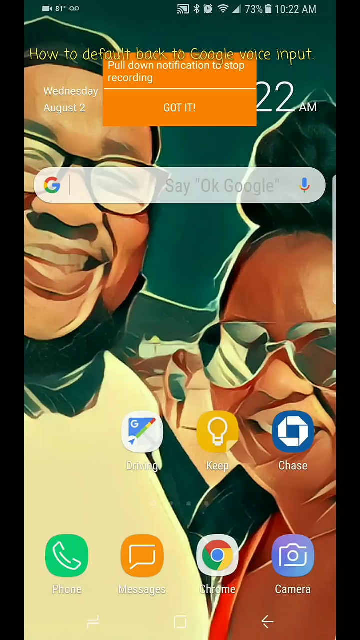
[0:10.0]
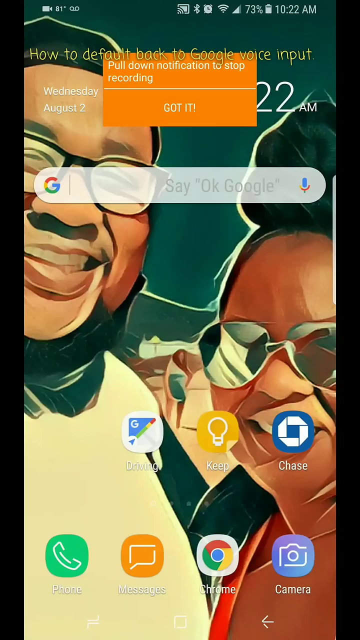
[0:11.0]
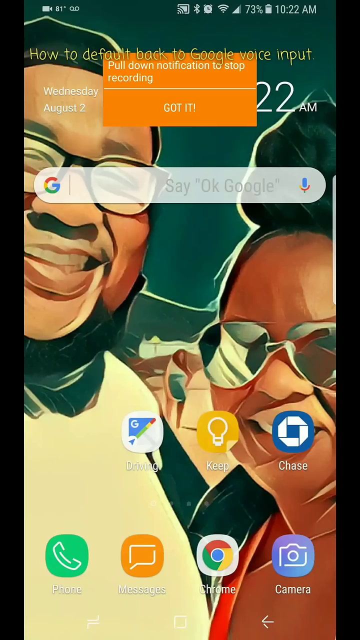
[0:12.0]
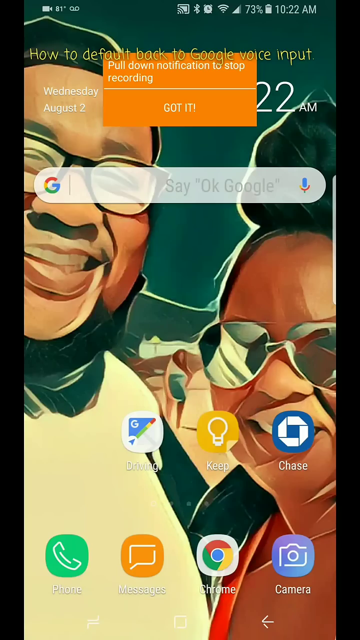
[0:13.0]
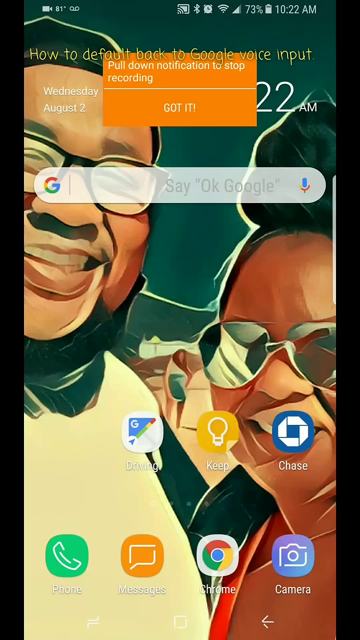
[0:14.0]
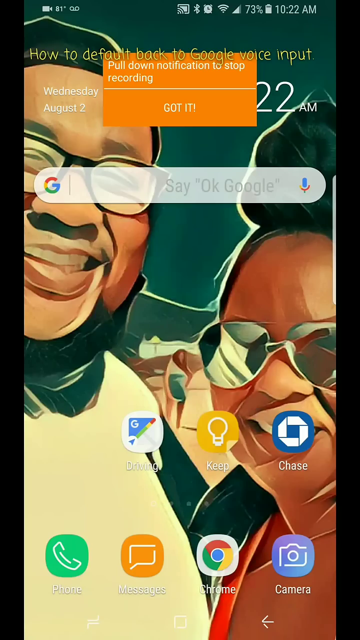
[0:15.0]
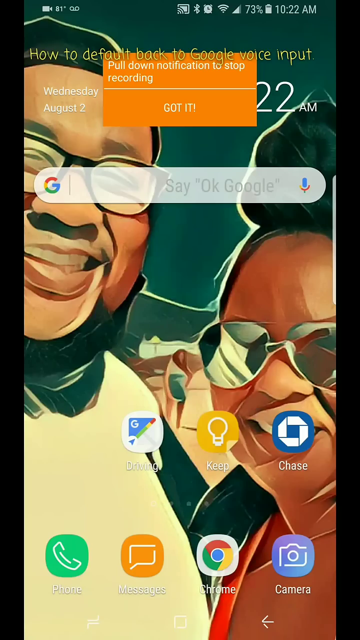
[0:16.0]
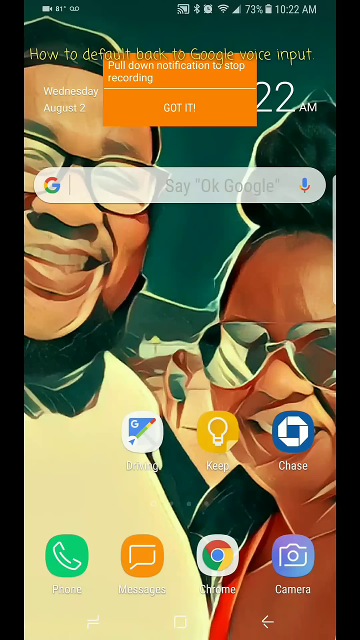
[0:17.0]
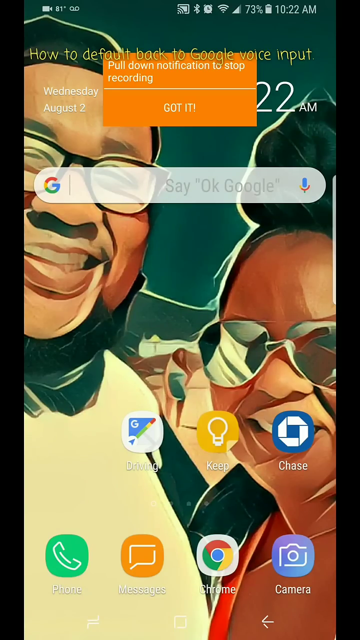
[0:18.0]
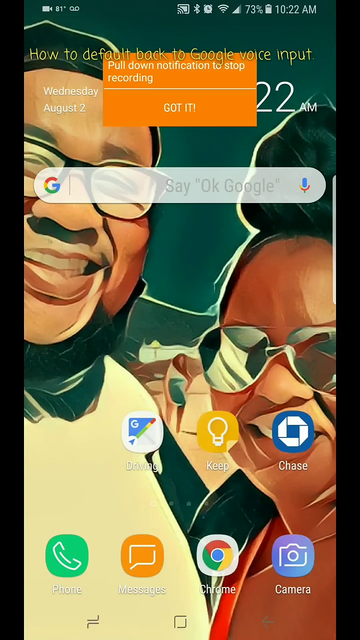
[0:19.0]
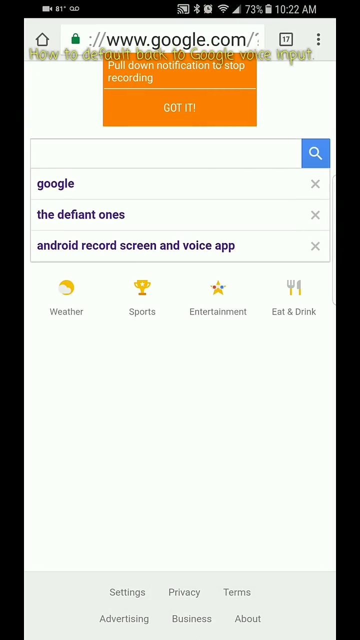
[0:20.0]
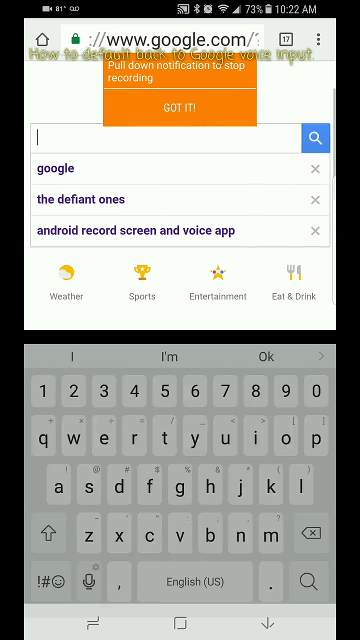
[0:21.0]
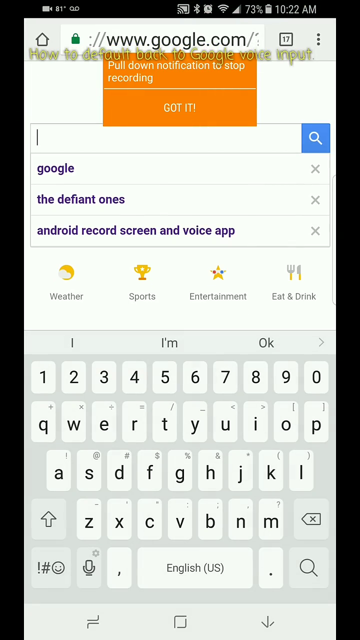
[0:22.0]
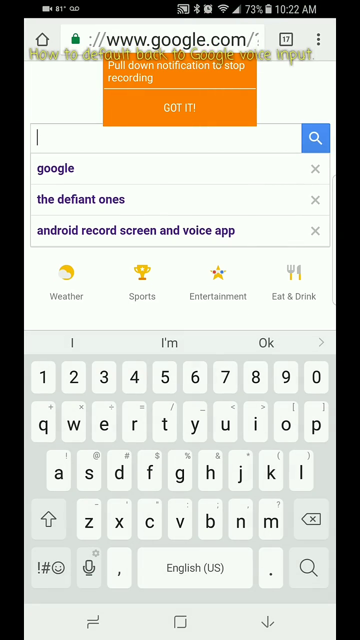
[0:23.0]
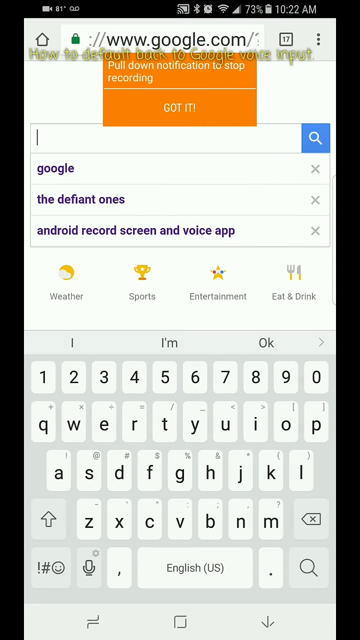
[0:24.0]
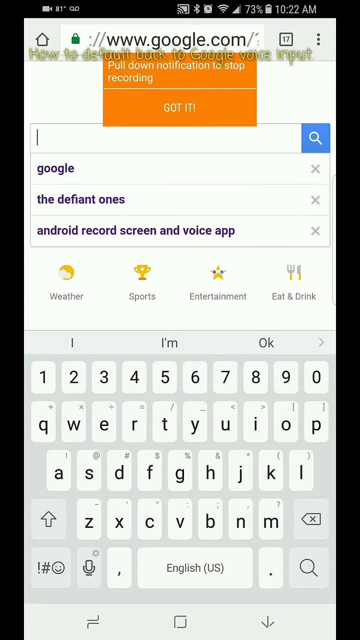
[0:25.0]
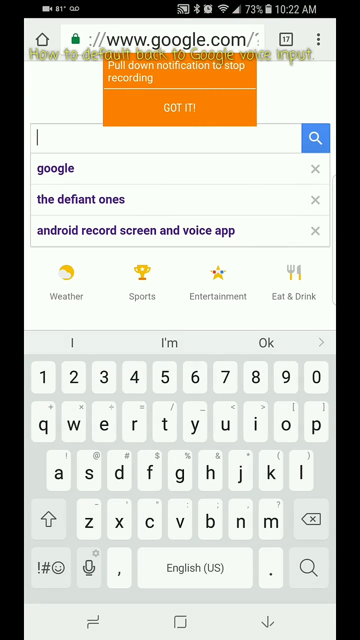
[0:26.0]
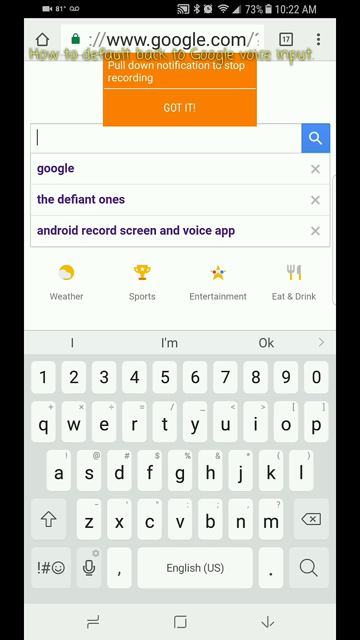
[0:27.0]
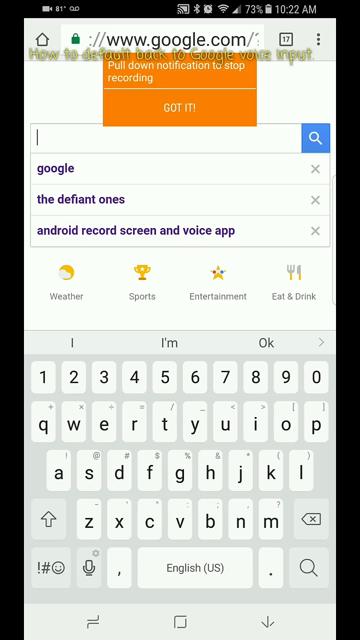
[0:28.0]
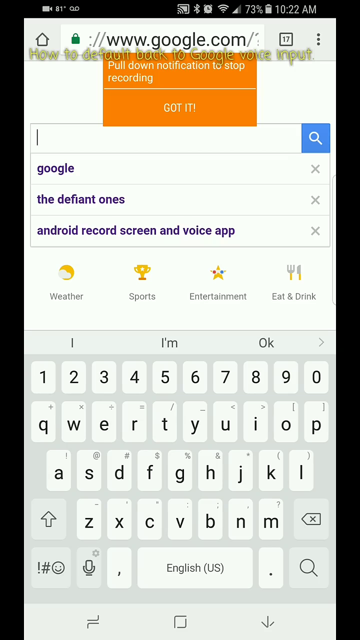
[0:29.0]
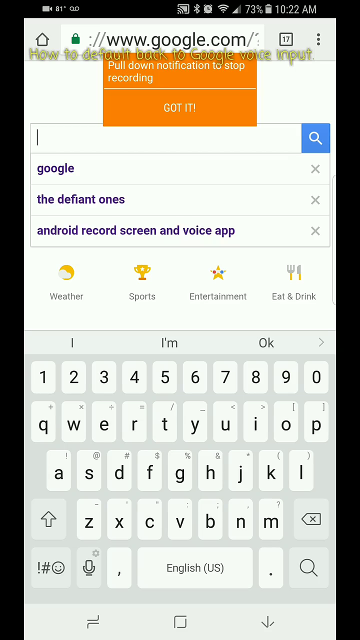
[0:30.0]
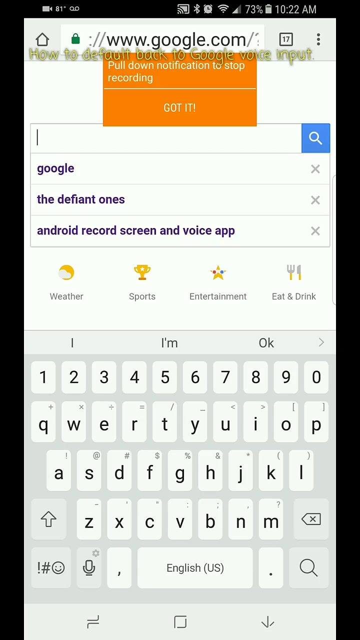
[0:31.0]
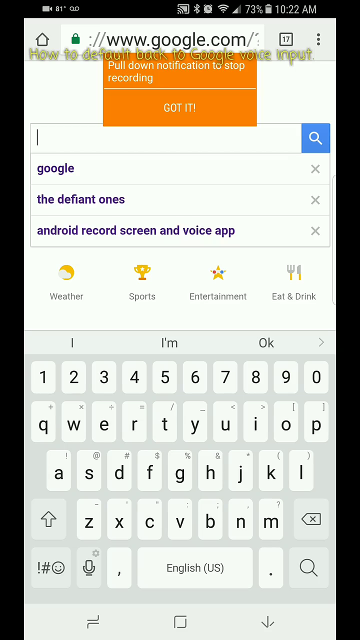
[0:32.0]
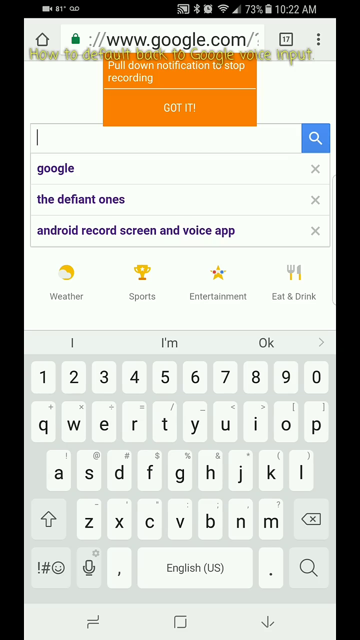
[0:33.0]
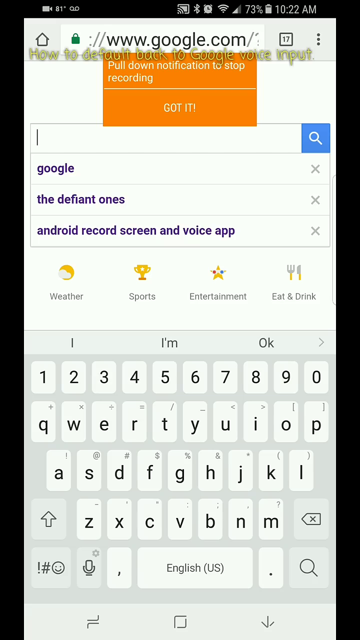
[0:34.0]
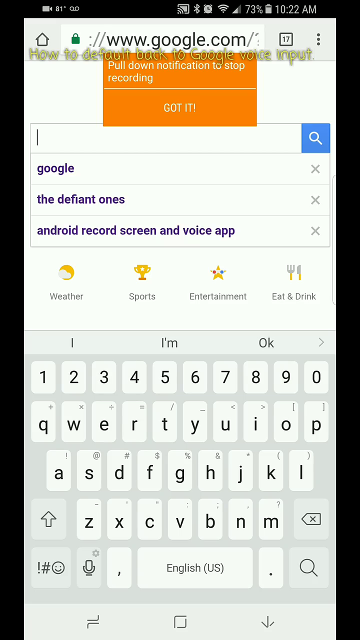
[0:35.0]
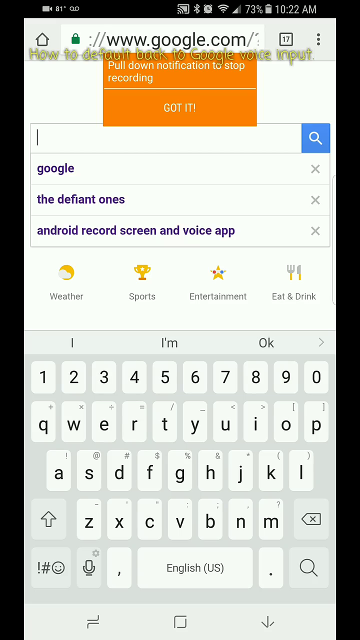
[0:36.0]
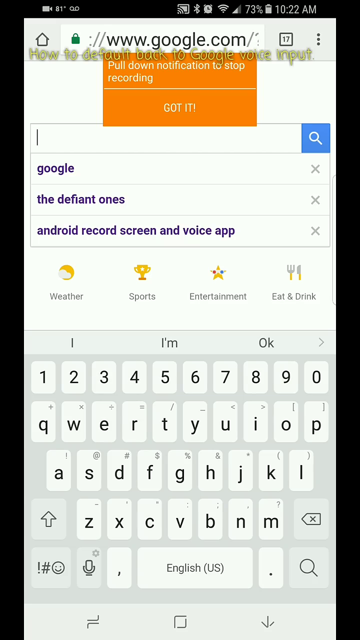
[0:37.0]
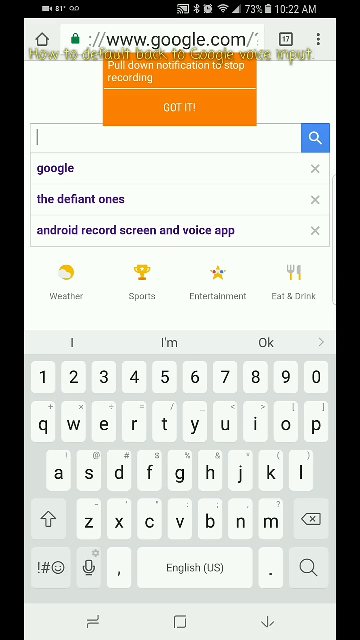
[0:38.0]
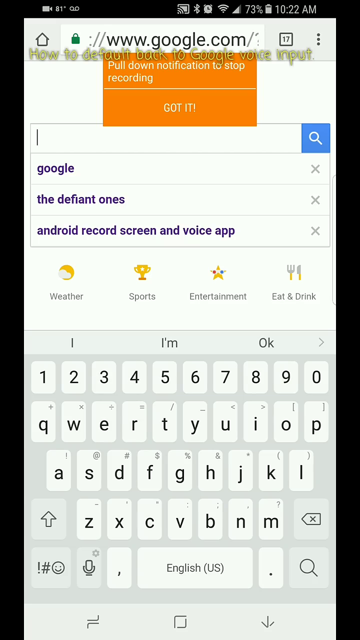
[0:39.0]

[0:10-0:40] The screen glitches briefly, but nothing else happens and the orange box remains. In the animated wallpaper, the man smiles broadly and appears to have a chin-strap beard under his chin. The pair look like they are at the beach, and someone in the distance between them looks like they lost something. Just below the woman are three apps: apparently Google Maps, in blue and red with a pin, a yellow light bulb, and a Chase logo app. The bottom row has four apps: phone, messaging, Google Chrome, and camera. The view then switches to Google, where three previously typed entries appear in purple, with the guide notification still over the screen. The URL address is at the top, with a box showing 11 to its right, indicating 11 other open tabs, and the cursor blinks repeatedly. A keyboard is at the bottom, and weather, sports, entertainment, and eat and drink options appear between the purple text and the keyboard.